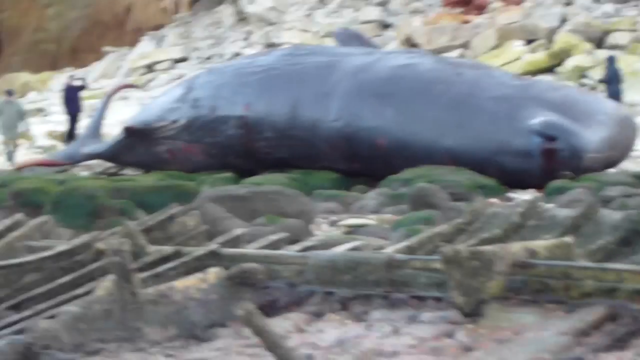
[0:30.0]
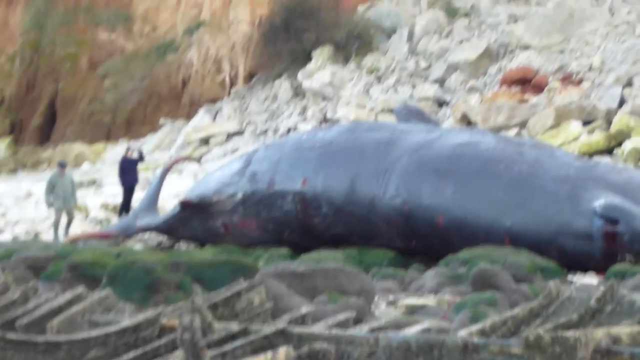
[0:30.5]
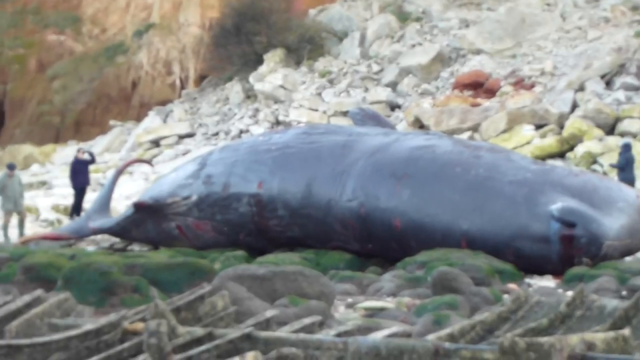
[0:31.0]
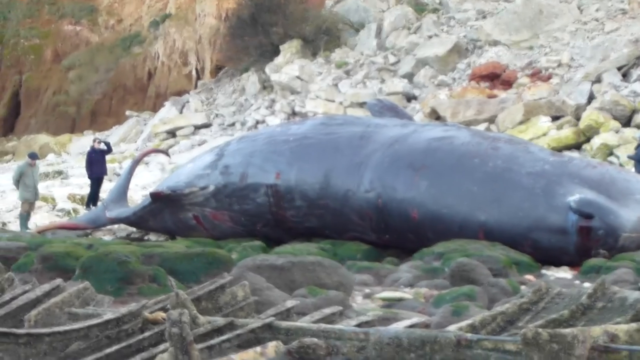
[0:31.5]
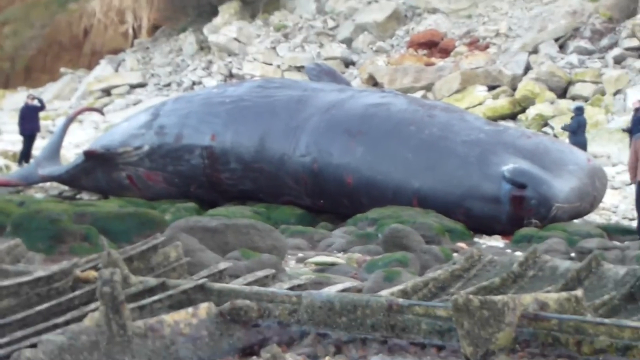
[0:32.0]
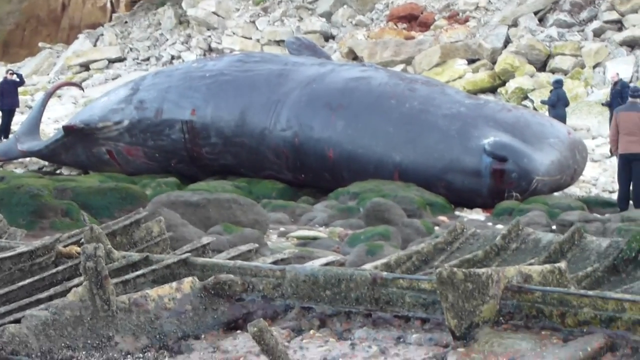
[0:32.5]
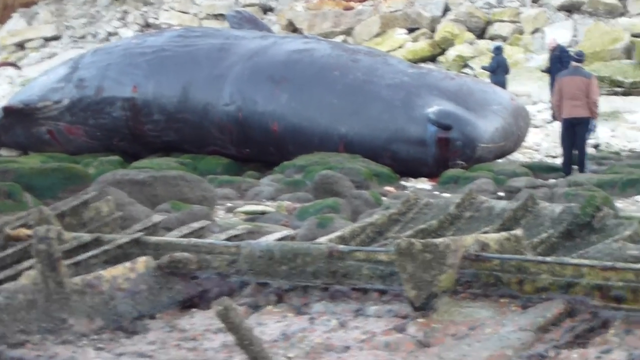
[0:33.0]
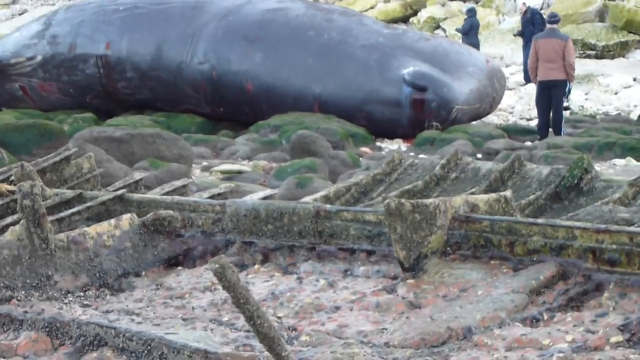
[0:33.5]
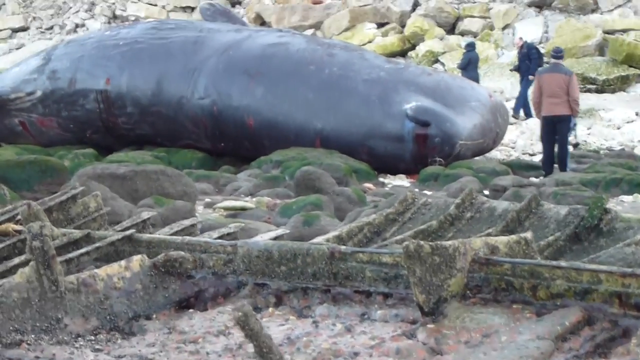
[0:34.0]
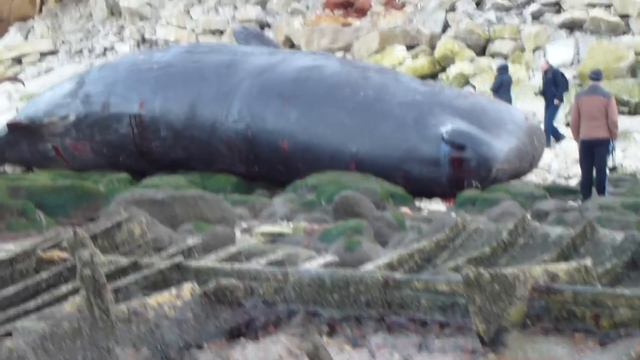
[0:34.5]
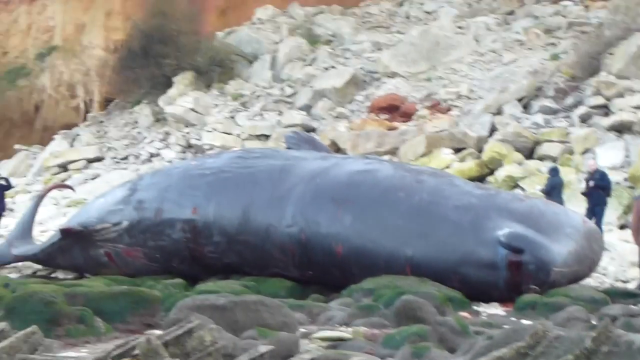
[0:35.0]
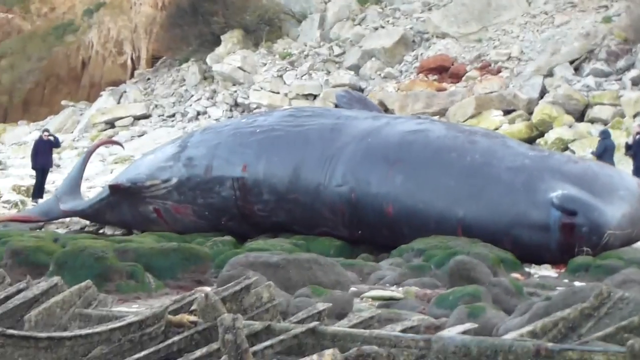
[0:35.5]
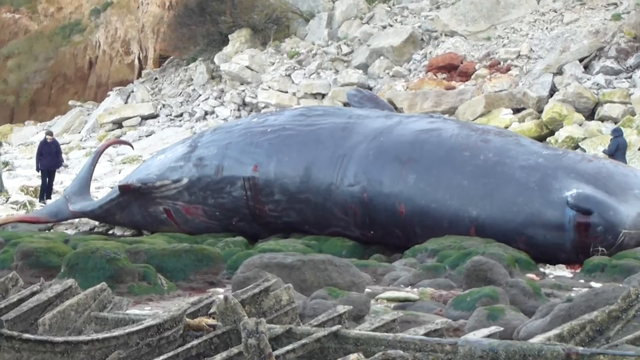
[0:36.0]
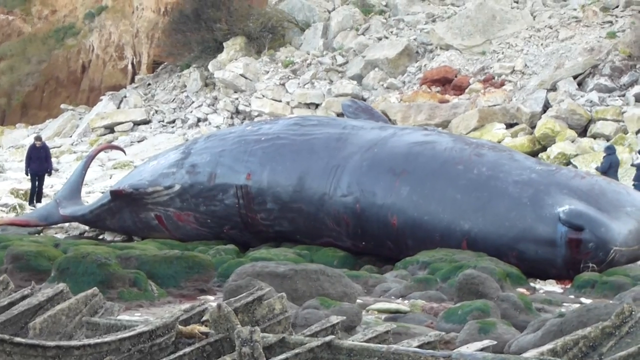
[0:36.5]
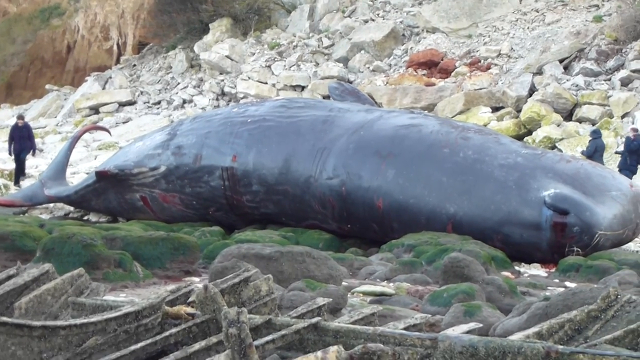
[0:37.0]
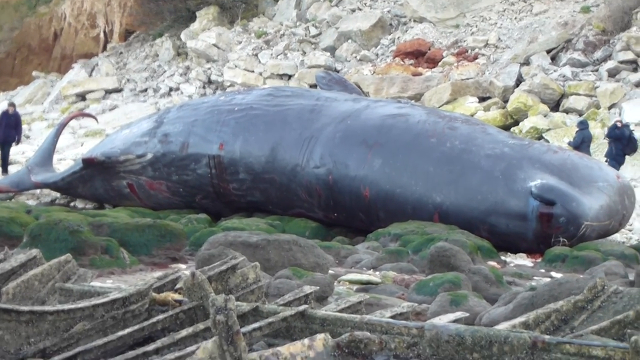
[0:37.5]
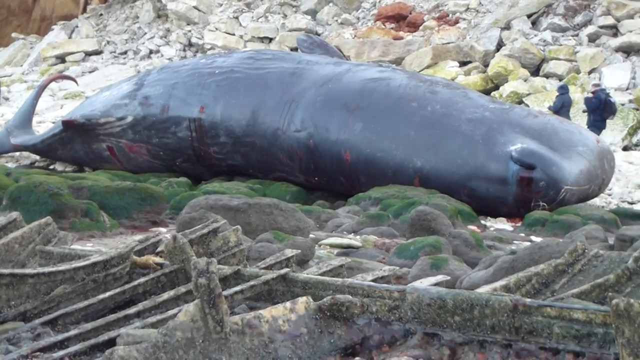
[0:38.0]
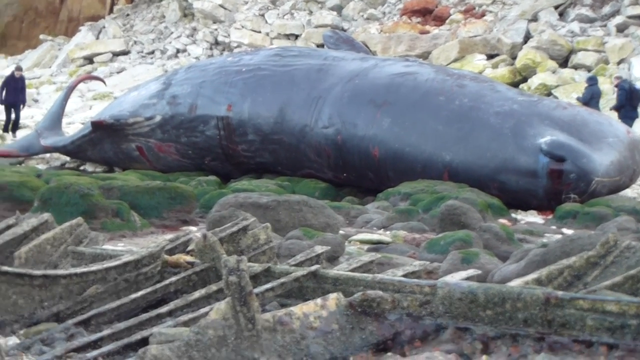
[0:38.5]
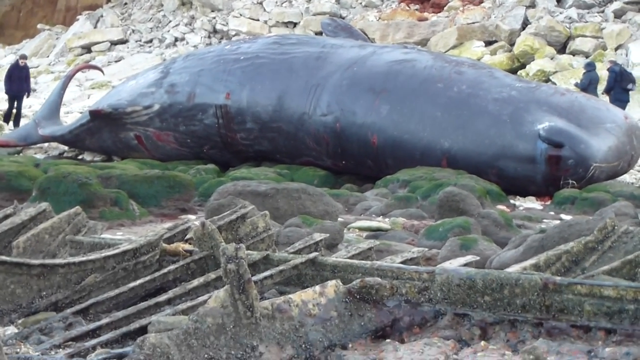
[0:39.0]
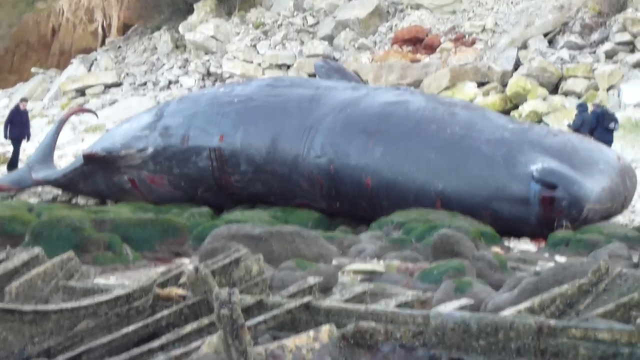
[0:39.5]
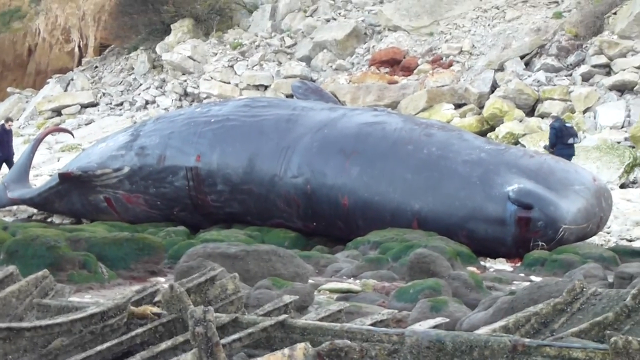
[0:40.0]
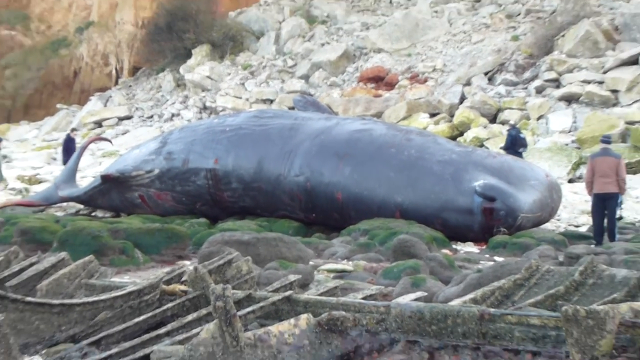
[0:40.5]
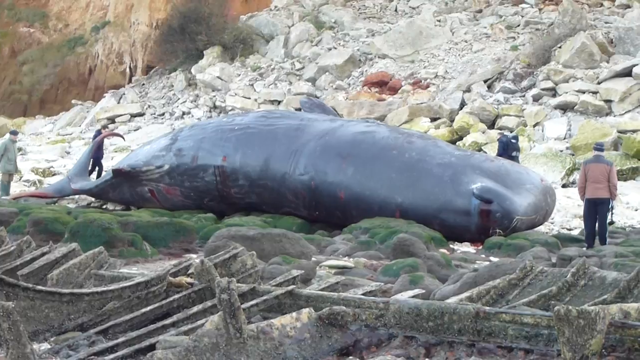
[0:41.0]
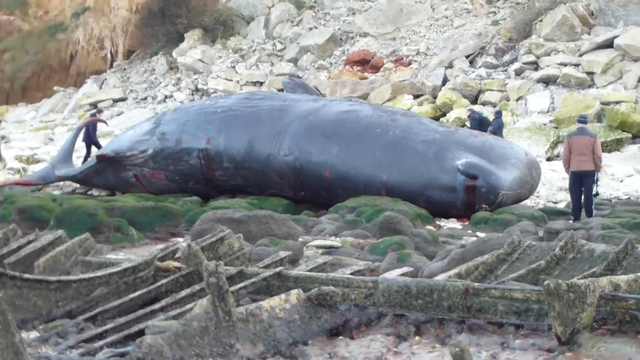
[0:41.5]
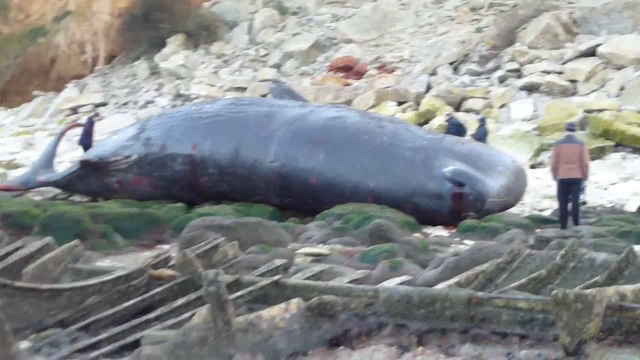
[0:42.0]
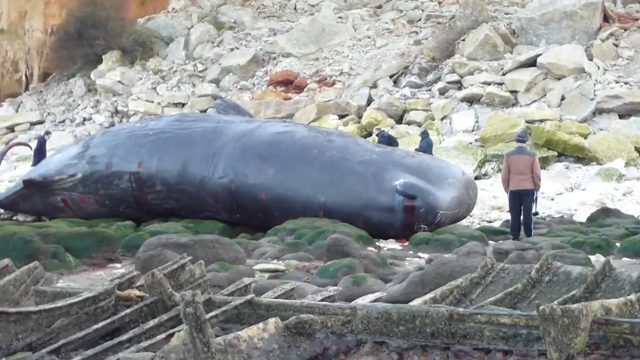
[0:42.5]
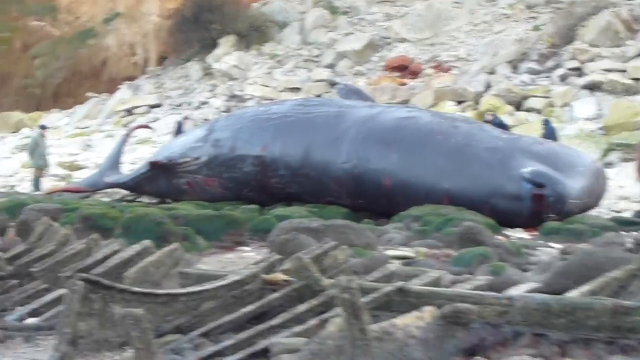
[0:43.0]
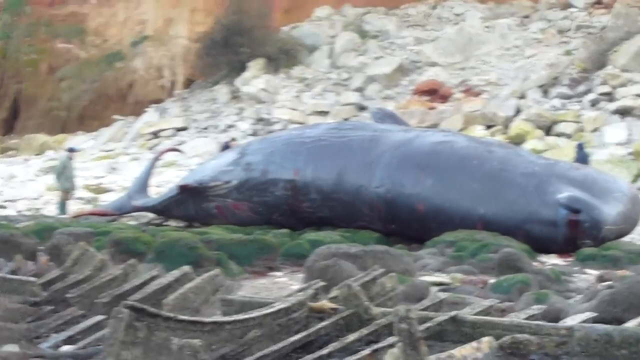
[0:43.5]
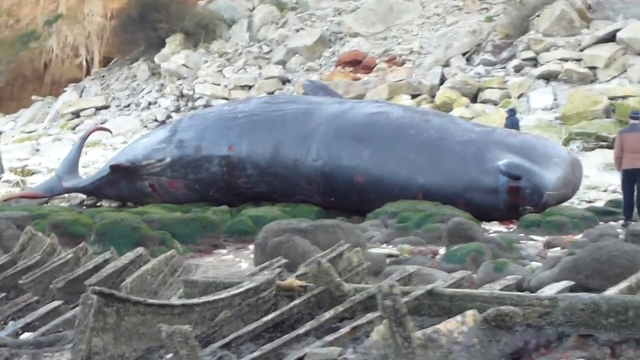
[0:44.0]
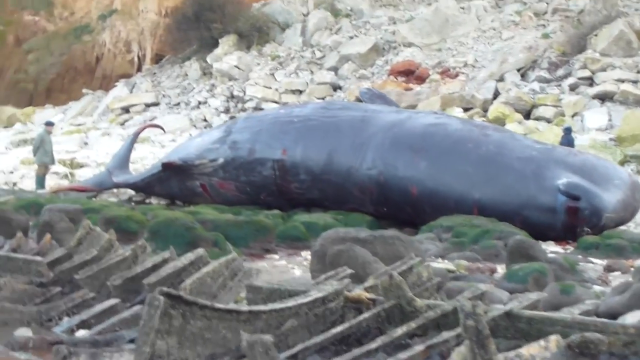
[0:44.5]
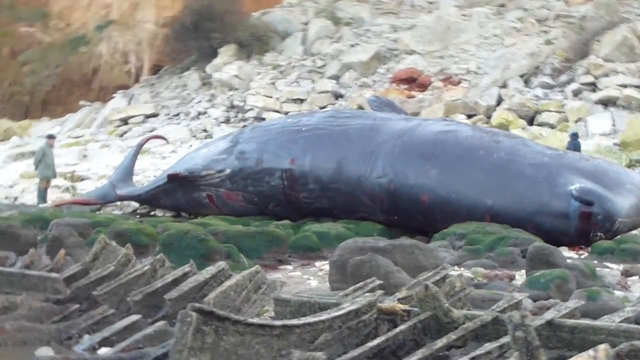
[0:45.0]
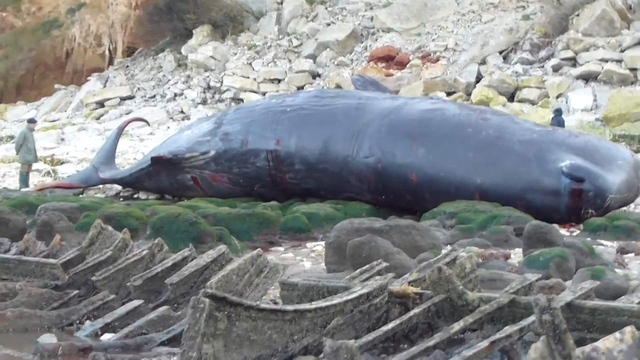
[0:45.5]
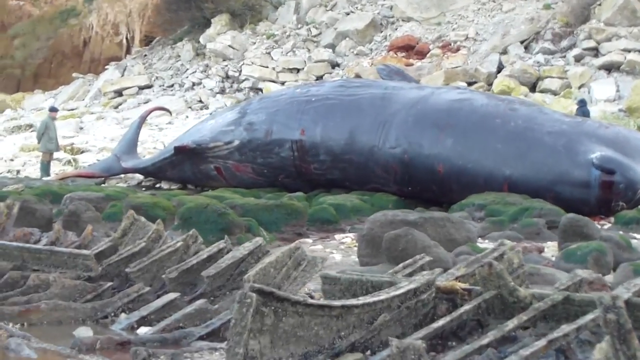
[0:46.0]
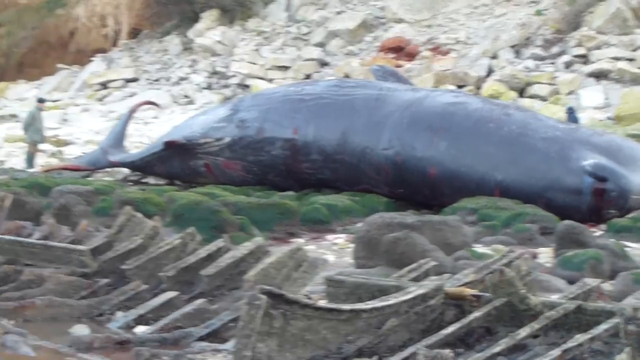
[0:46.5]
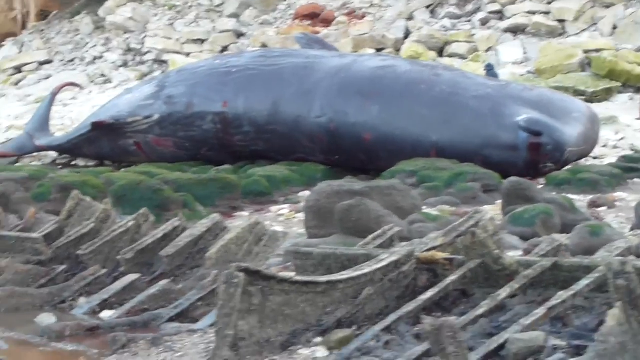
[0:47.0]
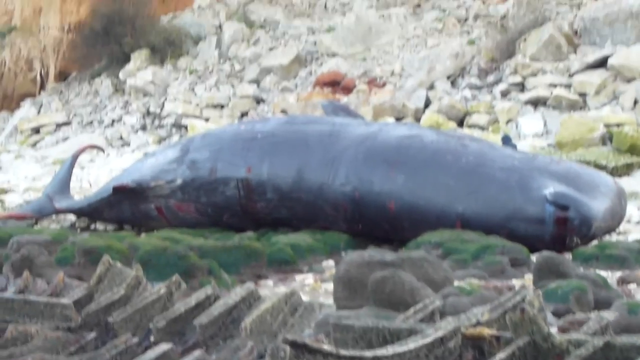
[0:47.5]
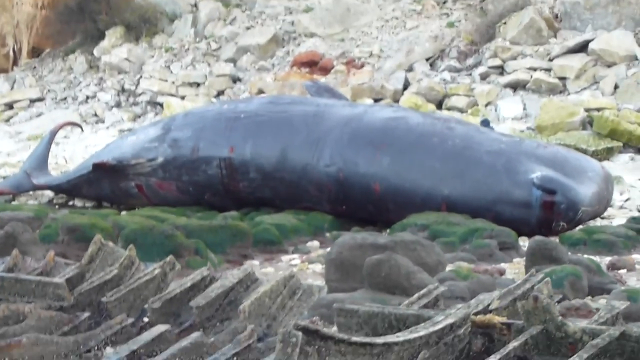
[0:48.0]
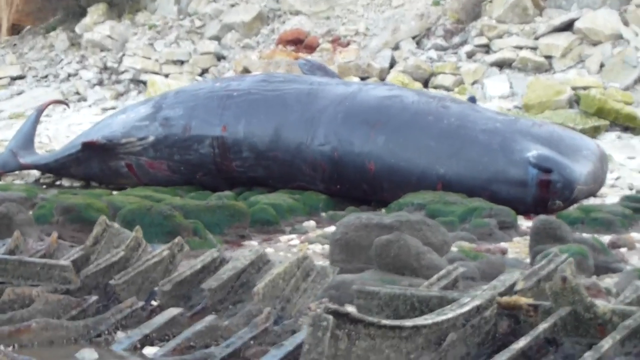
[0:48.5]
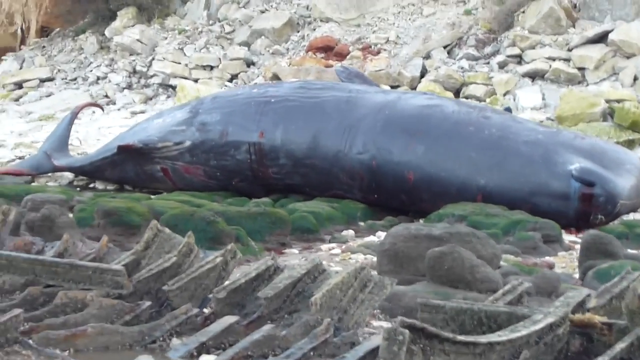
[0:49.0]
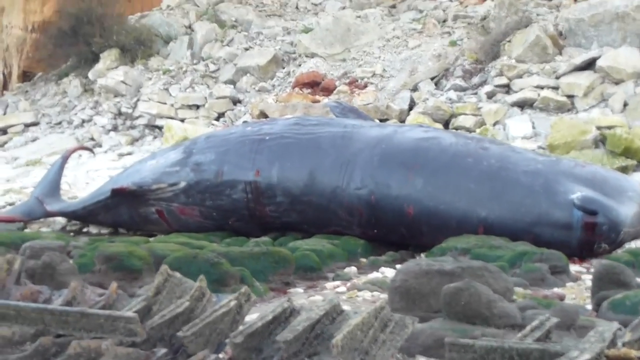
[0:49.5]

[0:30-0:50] On a stony beach, near what appears to be the wreckage of a boat that looks rotted, people stand around looking at a dead whale. Blood comes out of the whale's nostrils, and its tail end is scarred, cut up and bleeding. The large whale lies on its right side, and its full length is visible from head to tail. A mountain rises off the beach. There are many huge rocks on the beach and some mossy rocks, which is where the whale lies. The spectators do not touch it and stand at a distance. The back side of the whale's body is badly cut up with gashes that are visible even from far away, suggesting they are large.